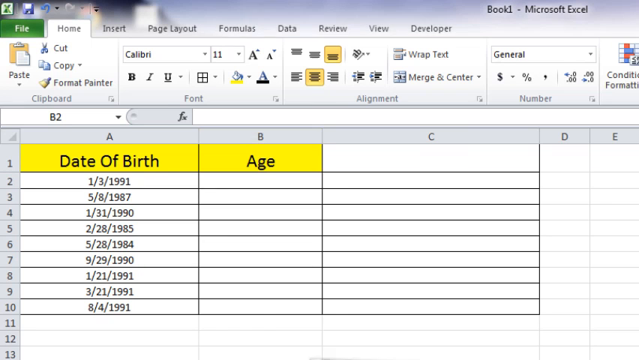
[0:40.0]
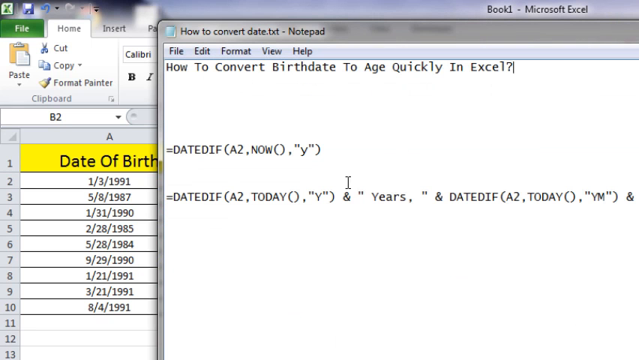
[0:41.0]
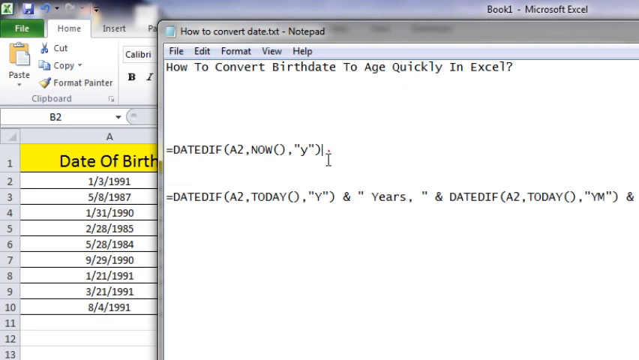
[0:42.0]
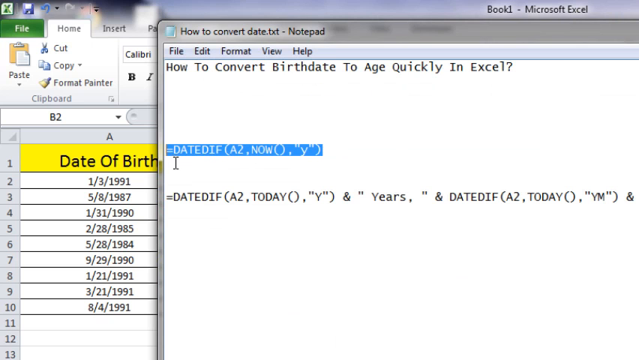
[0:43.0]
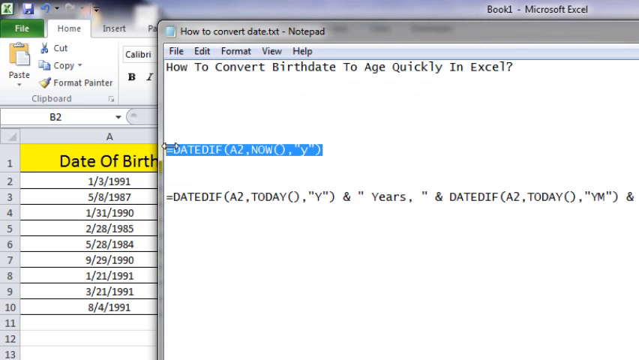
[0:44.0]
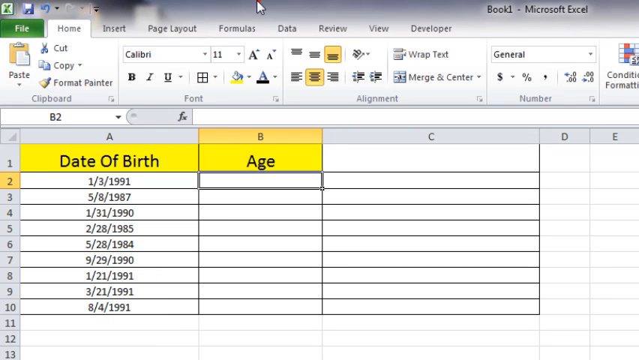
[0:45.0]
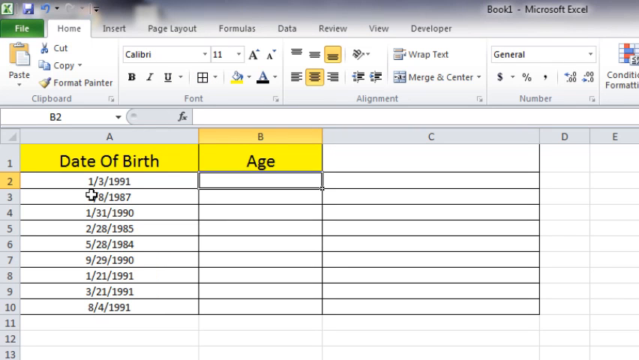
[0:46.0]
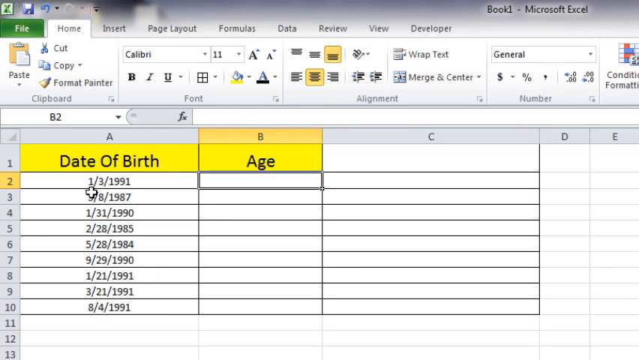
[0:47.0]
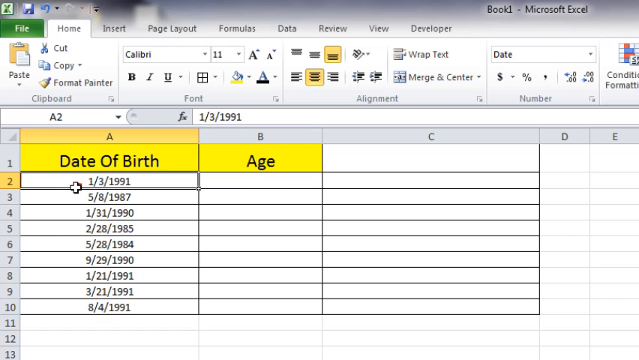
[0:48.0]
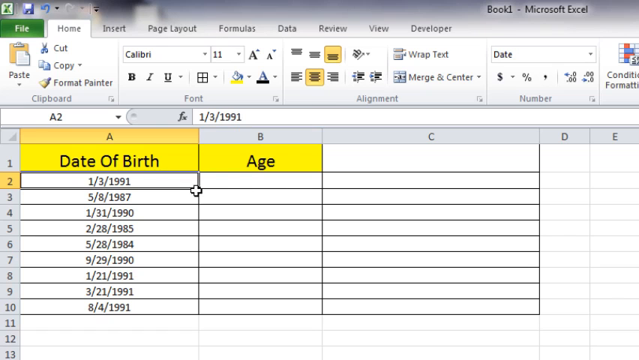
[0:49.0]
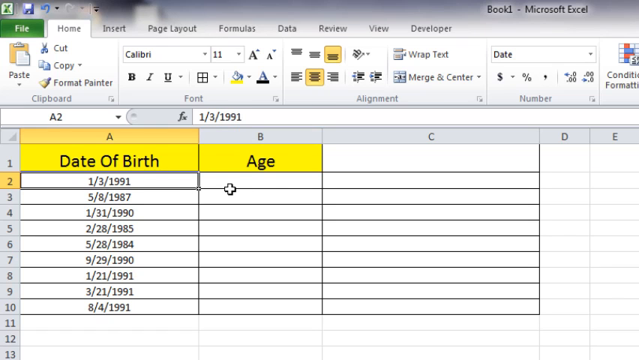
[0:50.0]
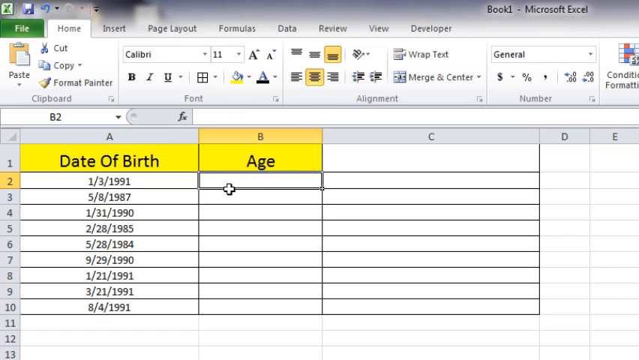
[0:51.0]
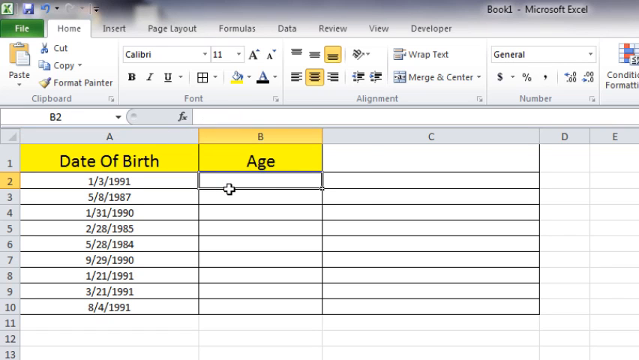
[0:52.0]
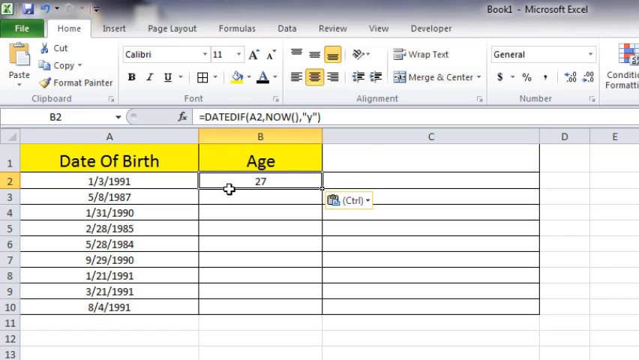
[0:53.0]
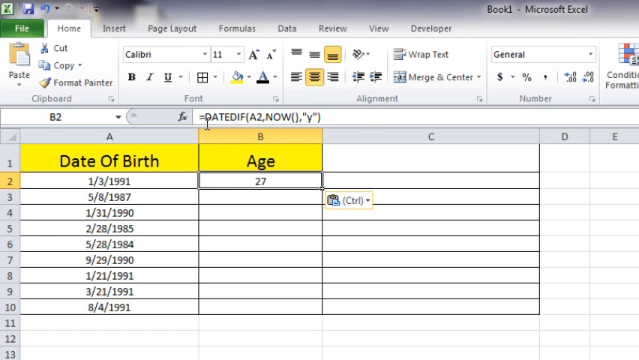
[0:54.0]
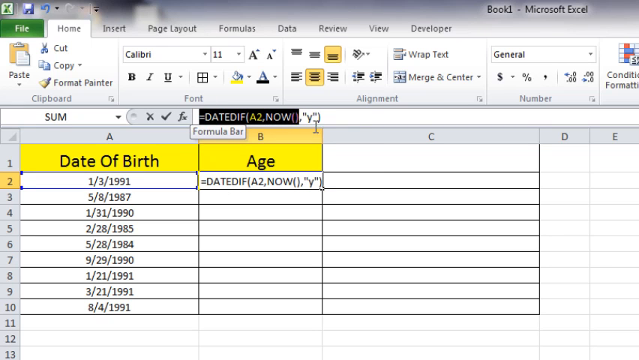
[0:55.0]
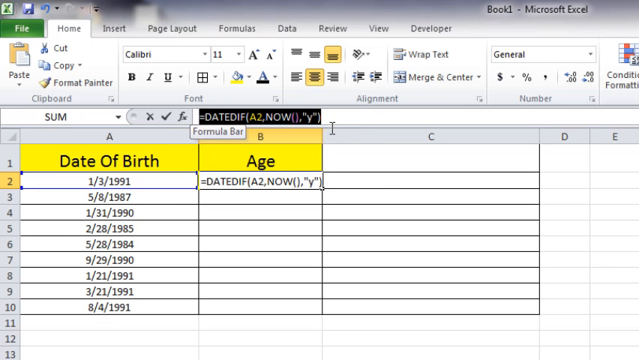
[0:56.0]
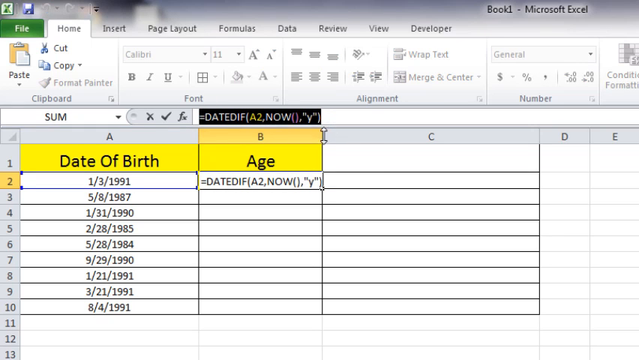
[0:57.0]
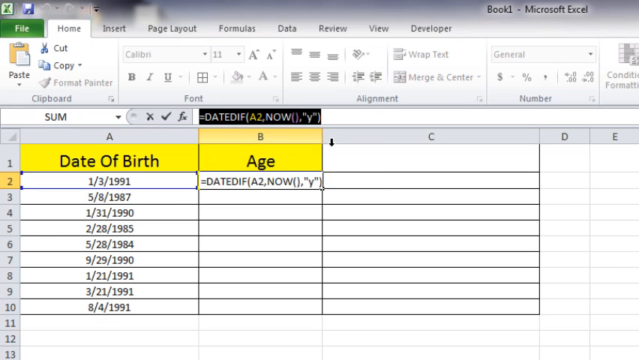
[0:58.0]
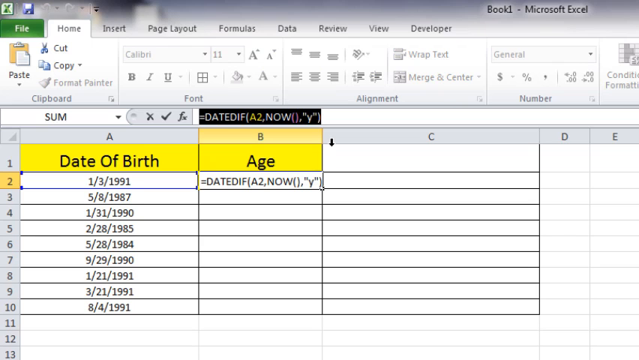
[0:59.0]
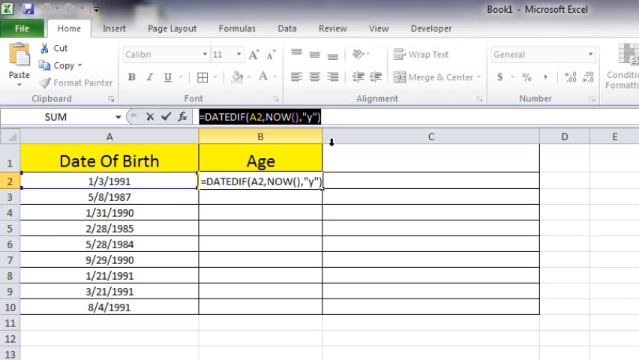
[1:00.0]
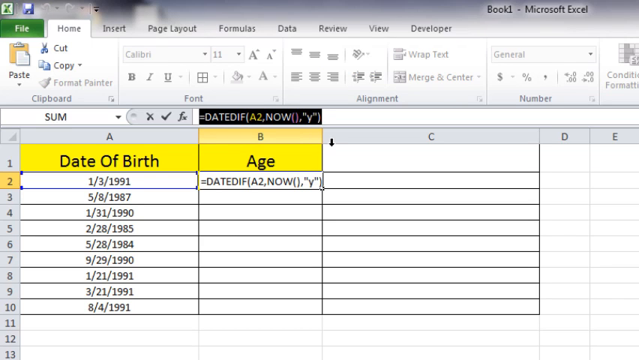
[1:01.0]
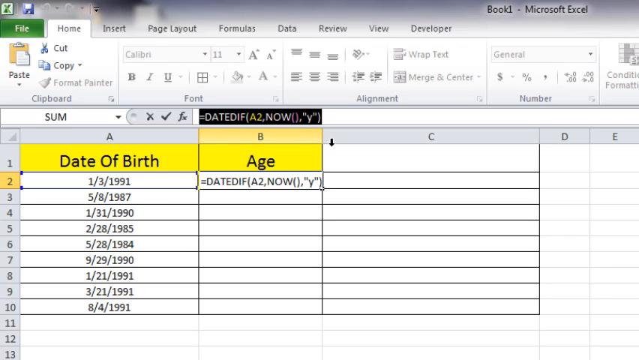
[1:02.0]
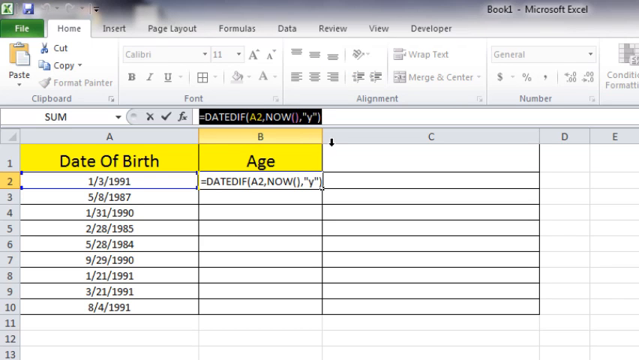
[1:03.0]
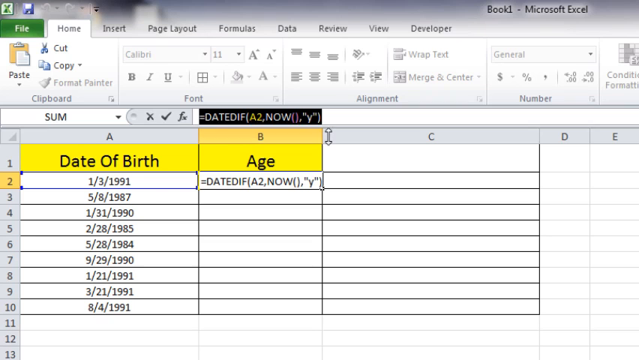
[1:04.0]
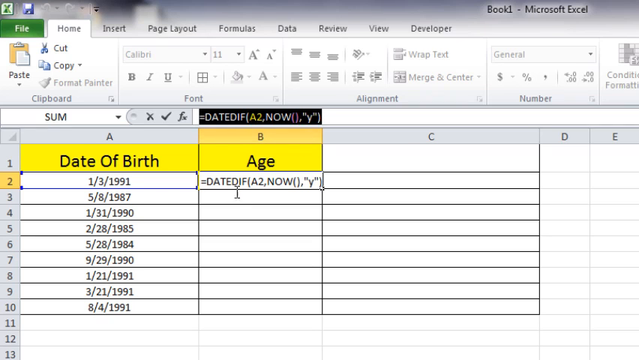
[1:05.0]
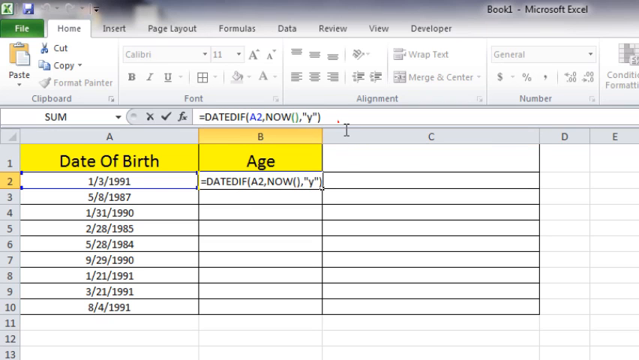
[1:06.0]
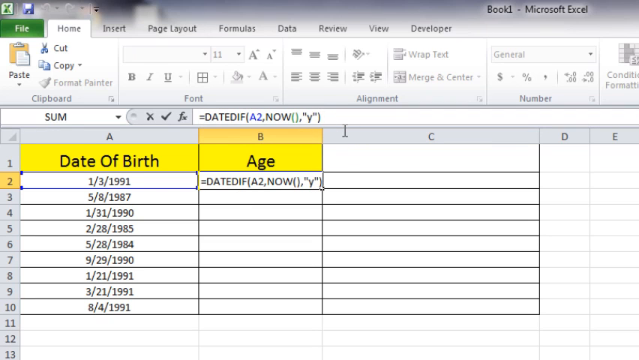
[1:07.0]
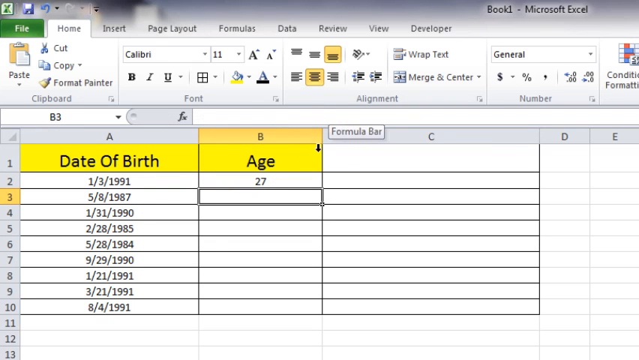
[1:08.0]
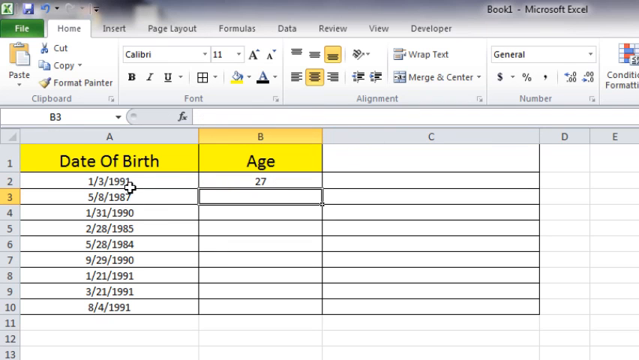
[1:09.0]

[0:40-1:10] The spreadsheet has borders around each cell, but only from column A through column C; columns D, E and beyond have no borders. Column C is much wider than columns D and E and is blank. Next, a notepad is opened, reading "how to convert birthdates to age quickly in Excel". An Excel formula in it is highlighted: "=DATEDIF" with the parameters A2, now, and the character Y. The view returns to Excel, so the notepad is no longer visible. In cell B2, the DATEDIF formula copied from the notepad is entered; it is still highlighted in the text box, and when enter is pressed, the age comes up as 27.